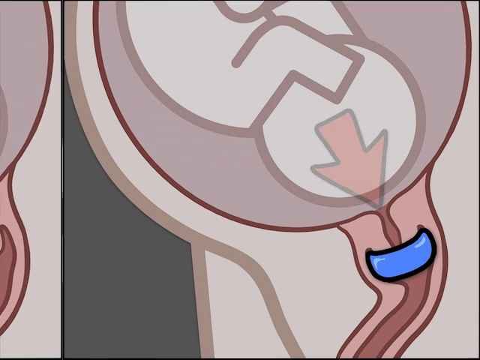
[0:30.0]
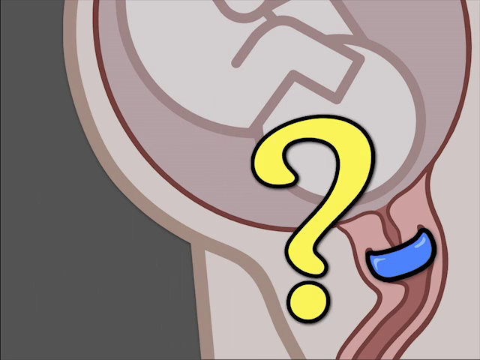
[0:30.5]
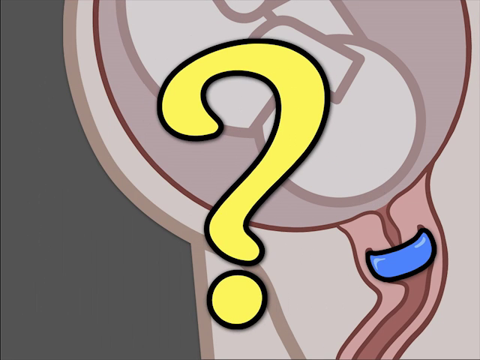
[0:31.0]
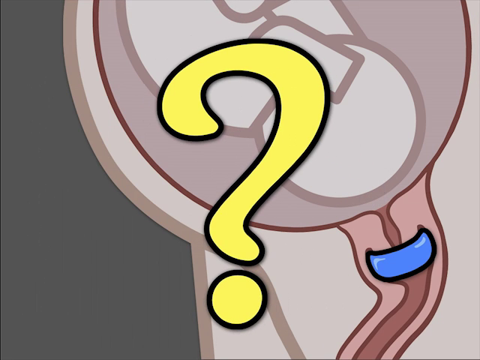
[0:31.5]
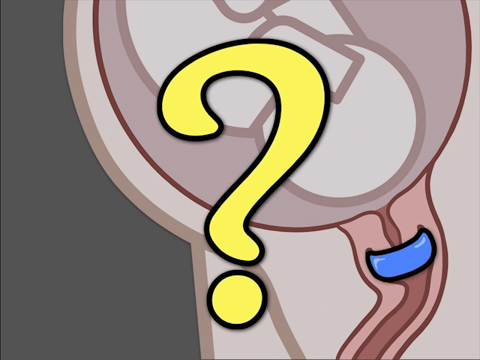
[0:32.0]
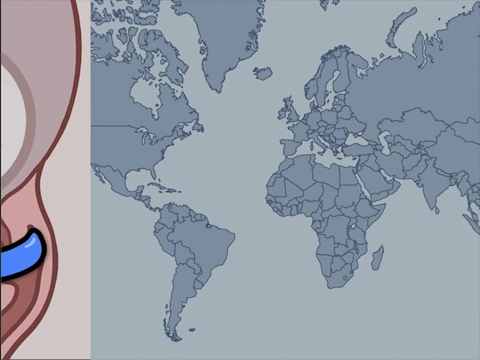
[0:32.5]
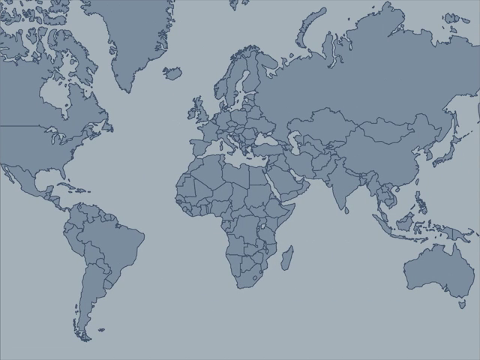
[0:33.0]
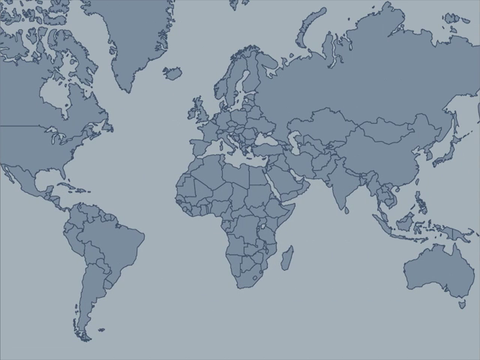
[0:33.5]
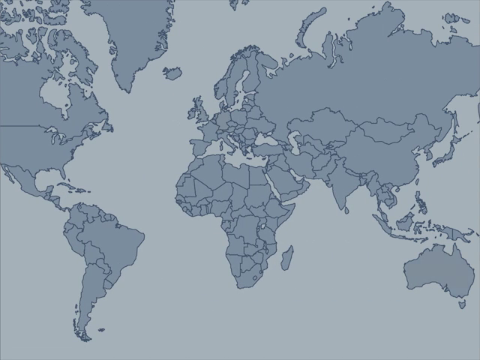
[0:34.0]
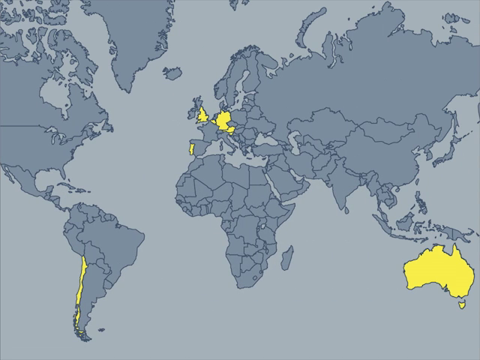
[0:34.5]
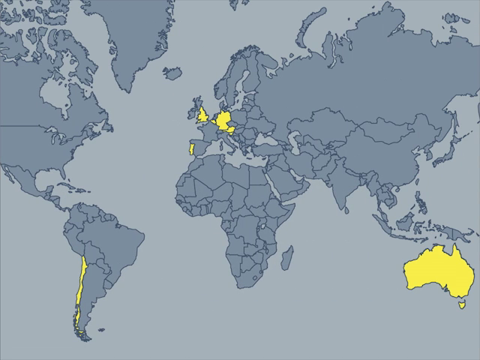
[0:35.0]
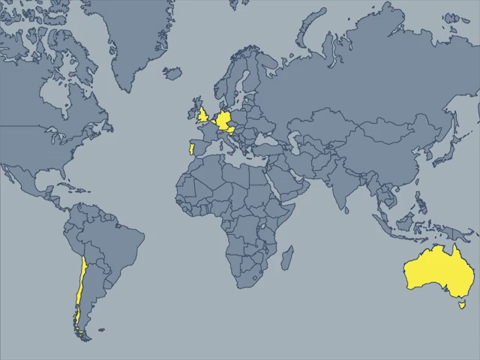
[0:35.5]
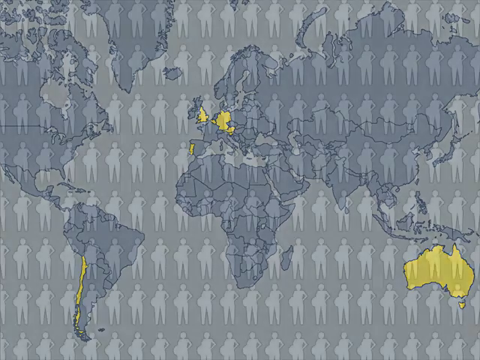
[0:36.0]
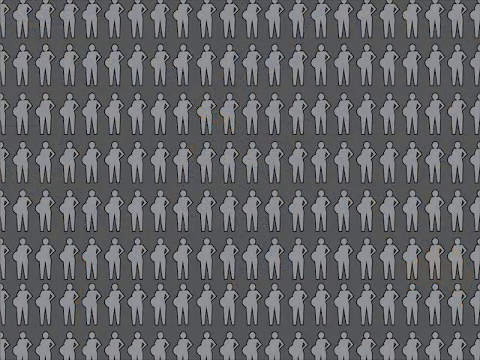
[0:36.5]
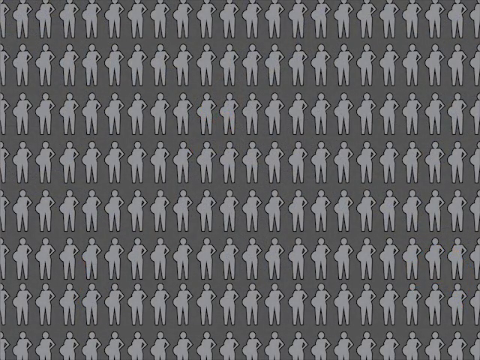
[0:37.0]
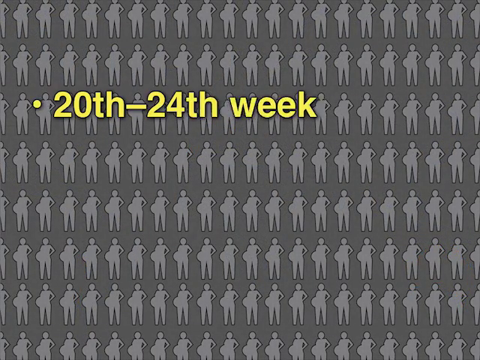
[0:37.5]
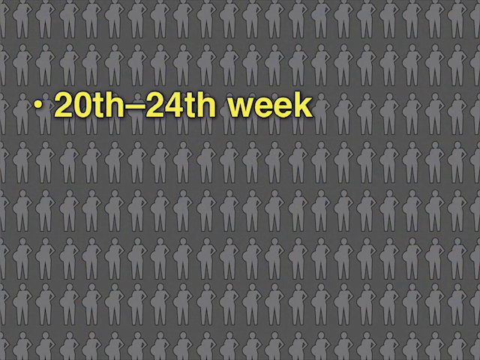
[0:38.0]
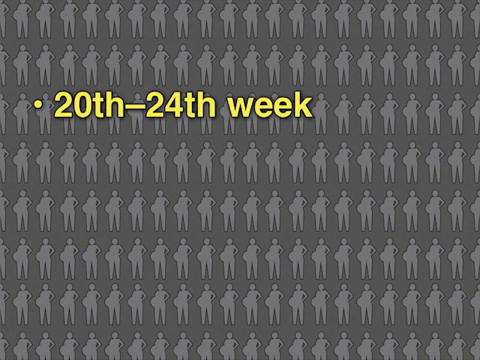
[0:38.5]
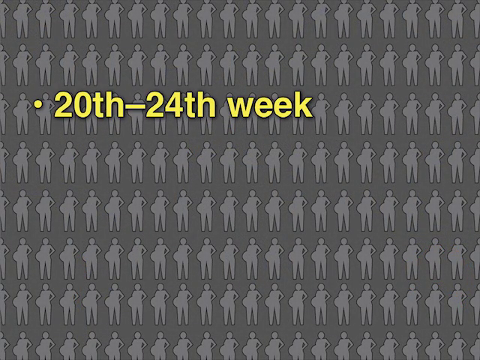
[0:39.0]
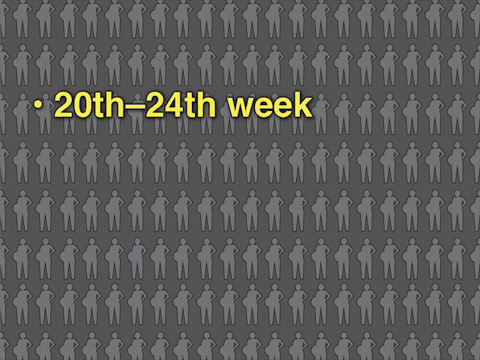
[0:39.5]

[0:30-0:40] A very basic computer-generated drawing shows a pregnant woman's stomach, zoomed in to the bottom. The baby's head is turned upside down and lined up with the cervix. There is an arrow over the baby's head, and a blue ring holds the cervix closed. A yellow question mark appears just out of the blue circle. The scene moves to a map of the world that highlights a couple of countries: one in South America, a couple in Europe, and Australia. Next comes a page filled with rows of identical drawings of pregnant women, gray on a slightly darker gray background. Text appears reading "20th to 24th week" and then "singleton pregnancy".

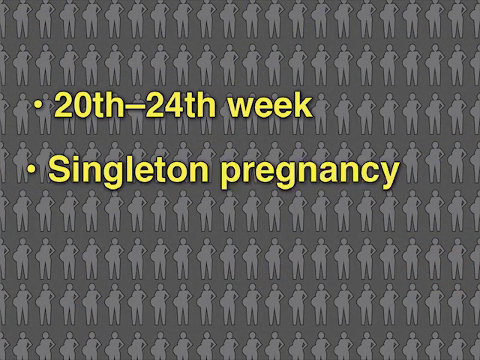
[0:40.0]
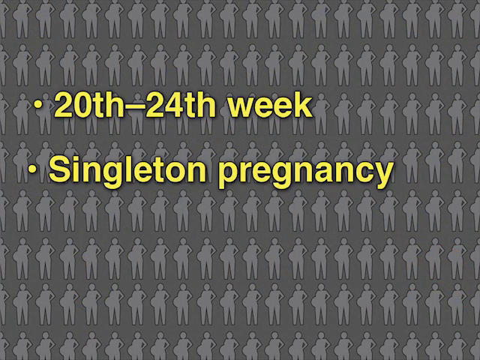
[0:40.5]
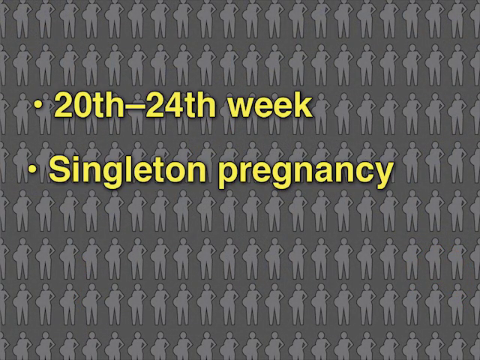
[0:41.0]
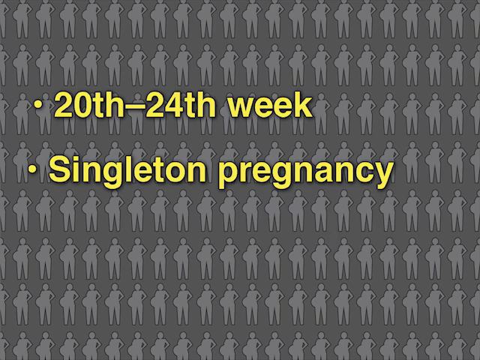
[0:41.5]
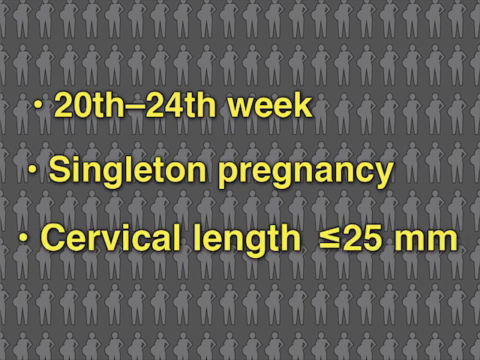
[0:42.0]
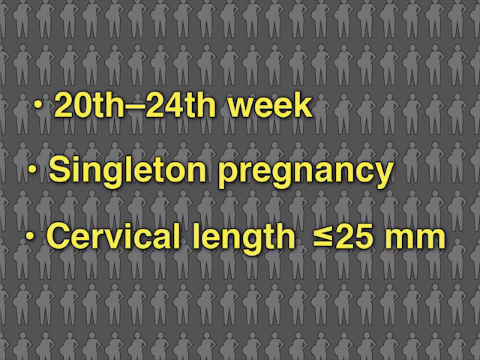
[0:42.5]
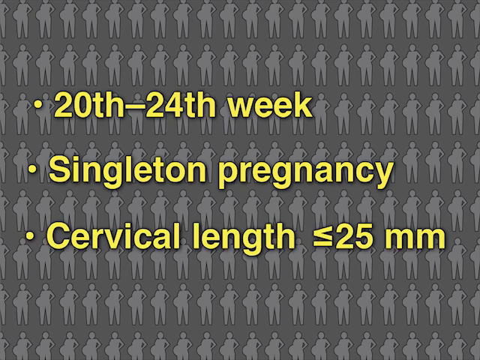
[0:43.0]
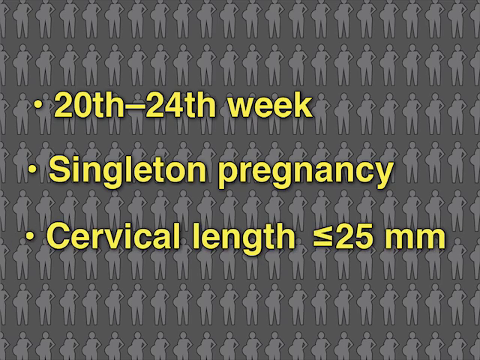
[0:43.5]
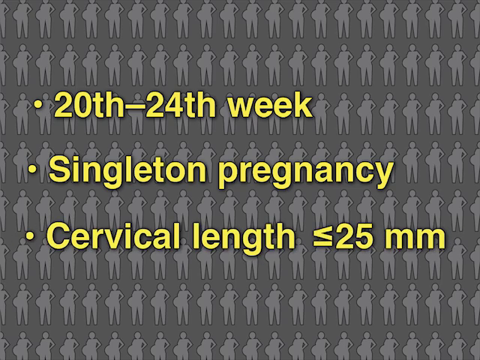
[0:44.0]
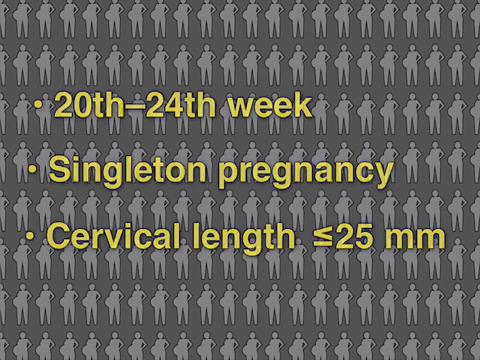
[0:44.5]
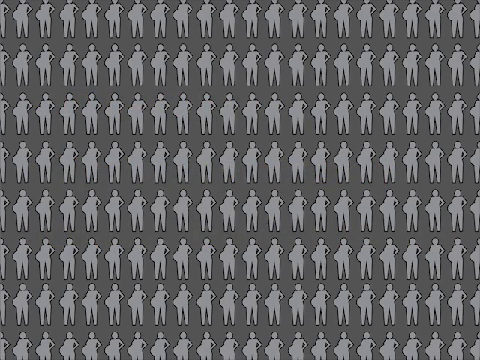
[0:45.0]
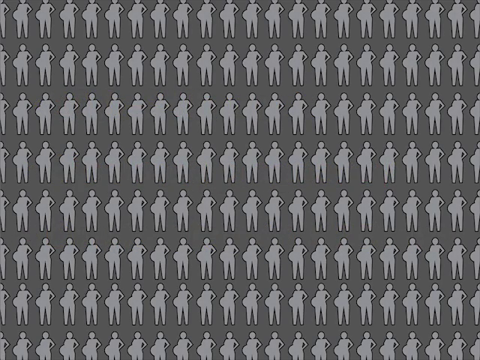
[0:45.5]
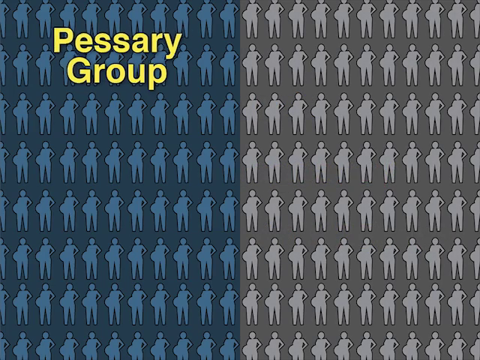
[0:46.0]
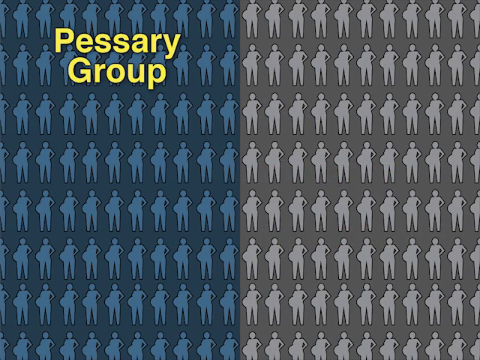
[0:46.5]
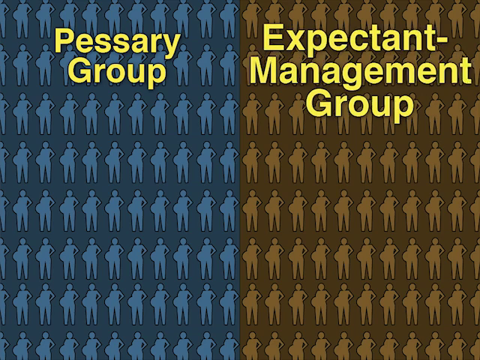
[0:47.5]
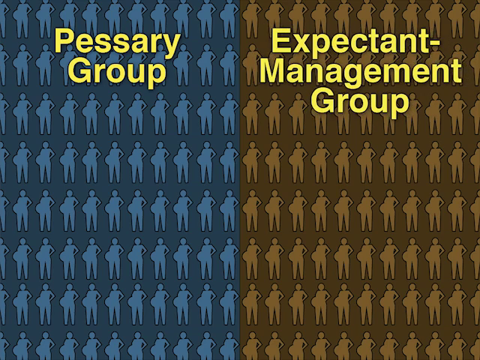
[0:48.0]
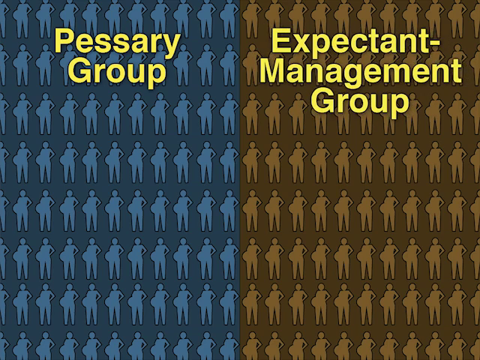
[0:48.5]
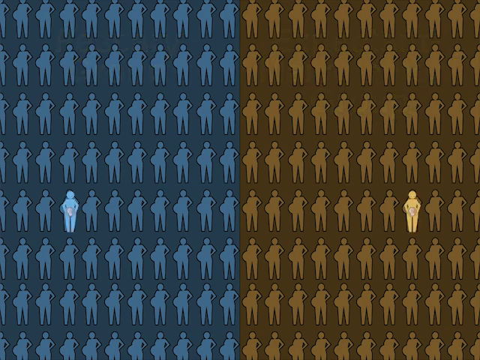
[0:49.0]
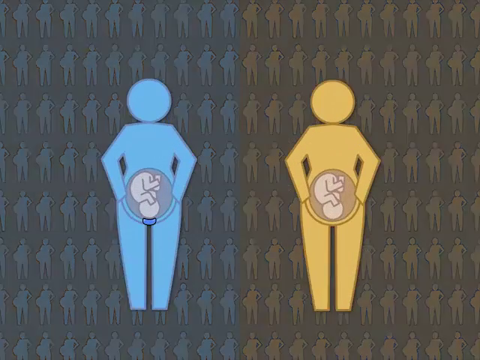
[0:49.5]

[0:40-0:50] The background is rows and rows of tiny identical icons that look like a pregnant woman. Text with bullet points appears on the screen: the top one says "20th to 24th week", the second says "singleton pregnancy", and another bullet then appears reading "cervical length less than or equal to 25 millimeters". Text pops up reading "PESSARY GROUP", and another on the other side of the page reads "EXPECTANT MANAGEMENT GROUP". Two very basic computer-generated images of women are then shown side by side, one outlined in blue and the other in yellow. The one in blue has a blue circle underneath her cervix, where the baby's head points downward.